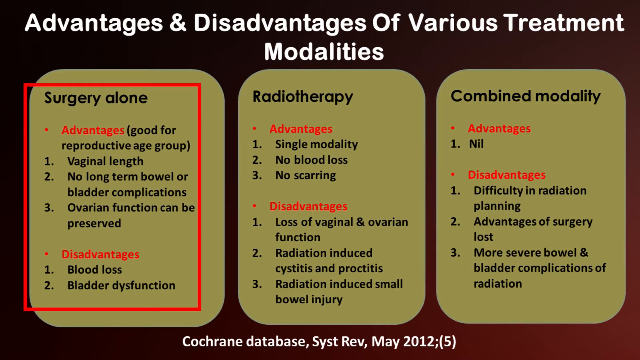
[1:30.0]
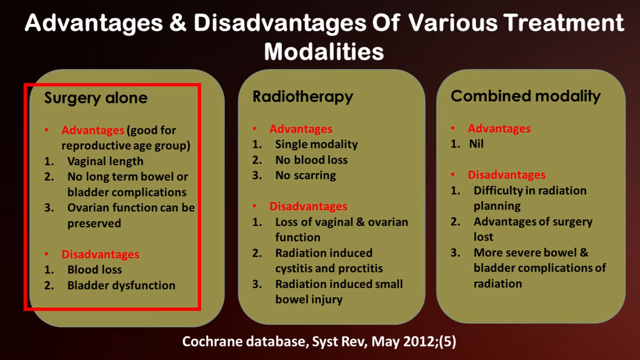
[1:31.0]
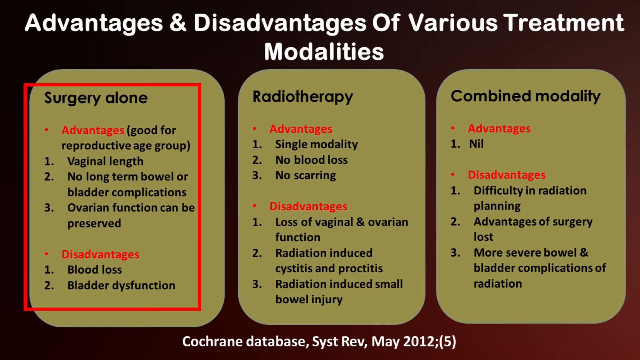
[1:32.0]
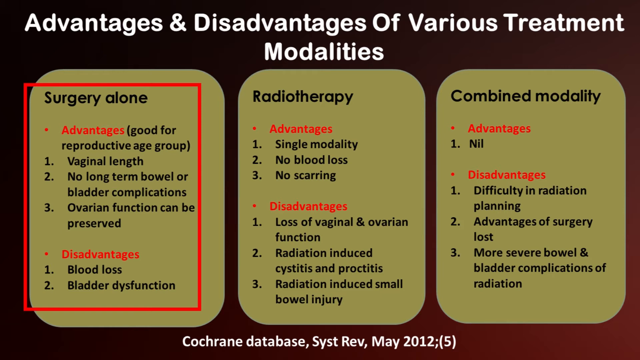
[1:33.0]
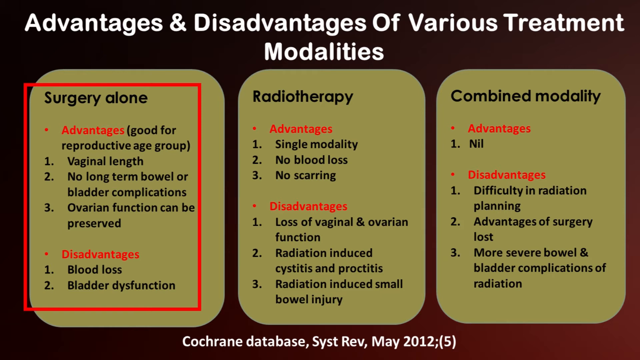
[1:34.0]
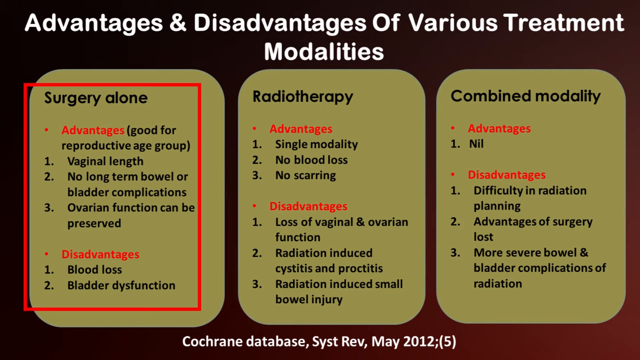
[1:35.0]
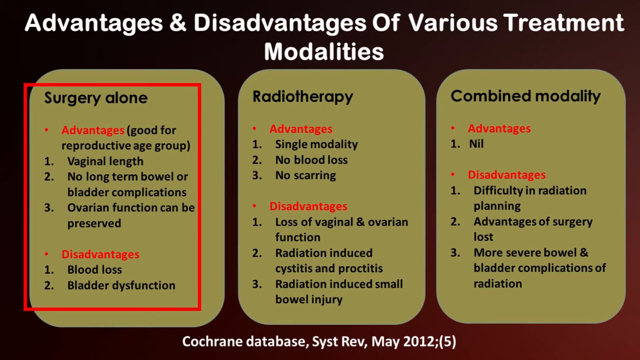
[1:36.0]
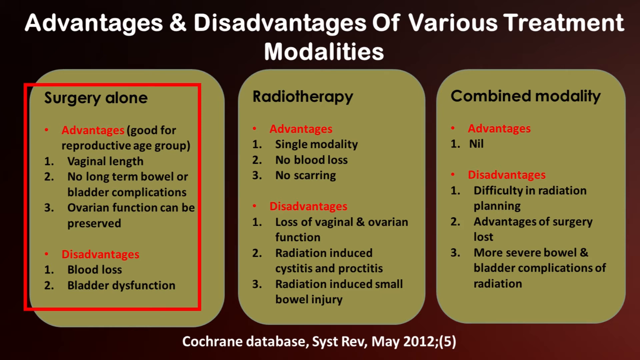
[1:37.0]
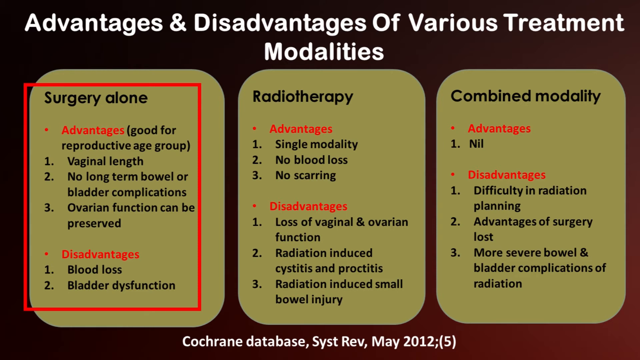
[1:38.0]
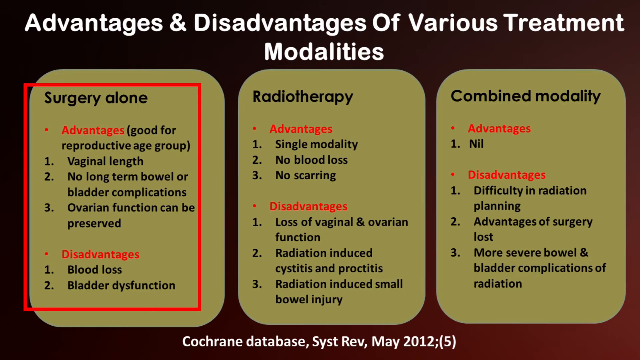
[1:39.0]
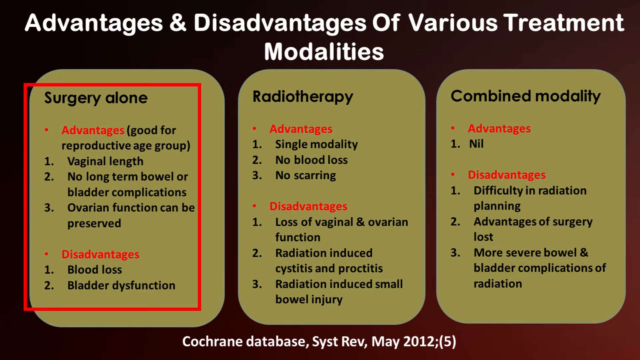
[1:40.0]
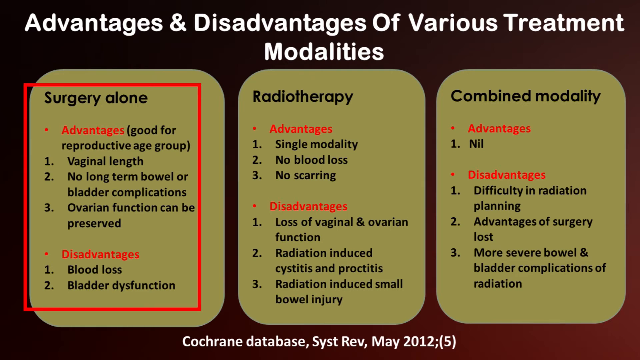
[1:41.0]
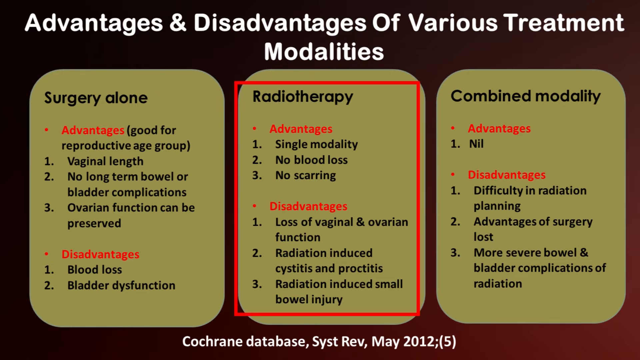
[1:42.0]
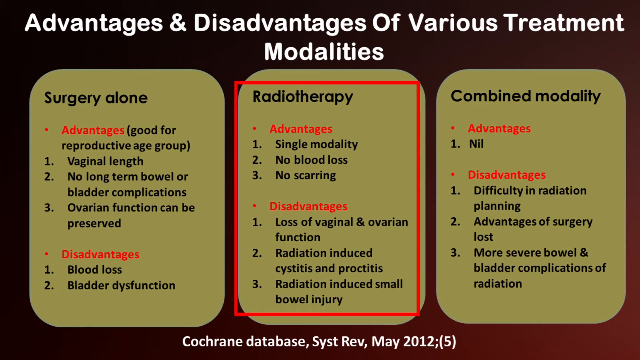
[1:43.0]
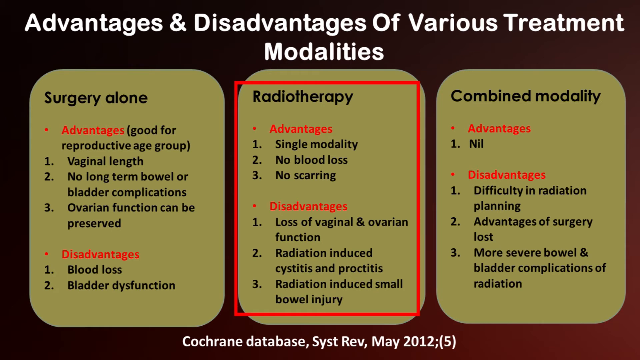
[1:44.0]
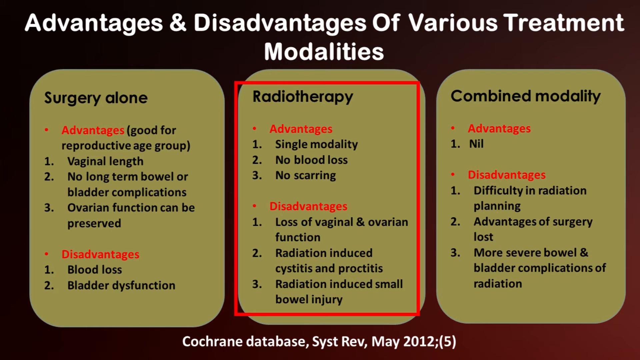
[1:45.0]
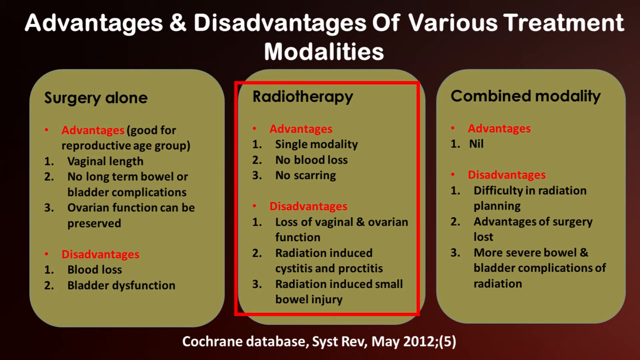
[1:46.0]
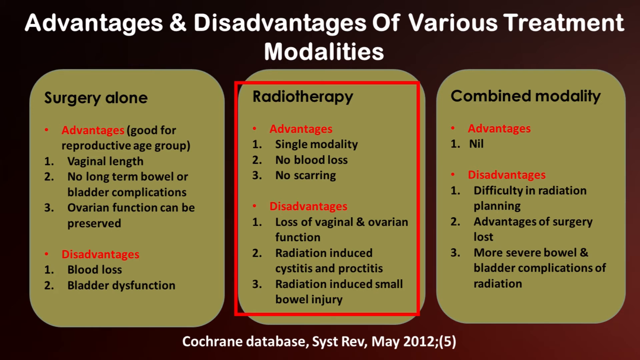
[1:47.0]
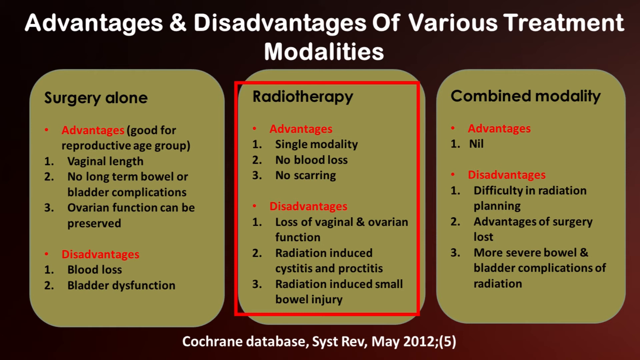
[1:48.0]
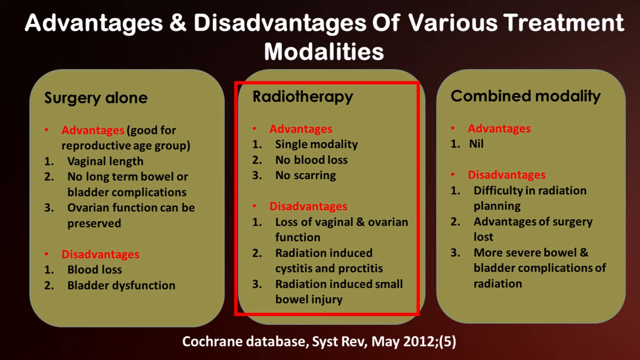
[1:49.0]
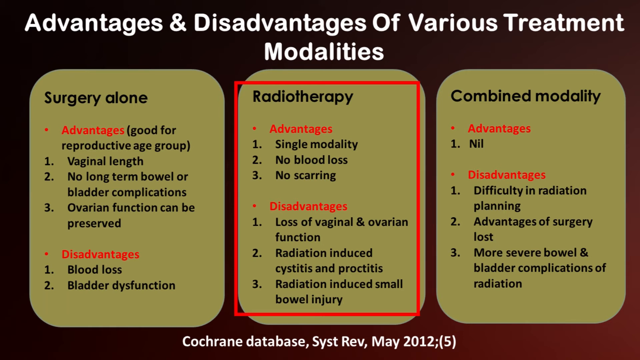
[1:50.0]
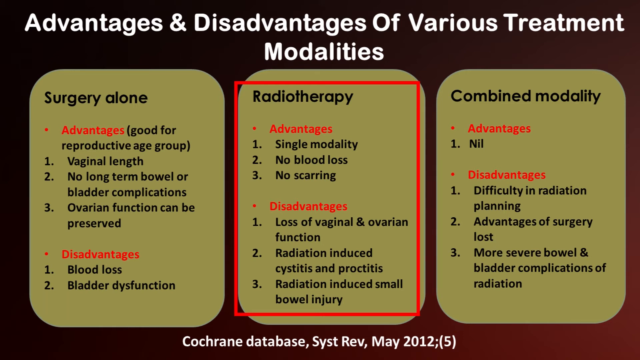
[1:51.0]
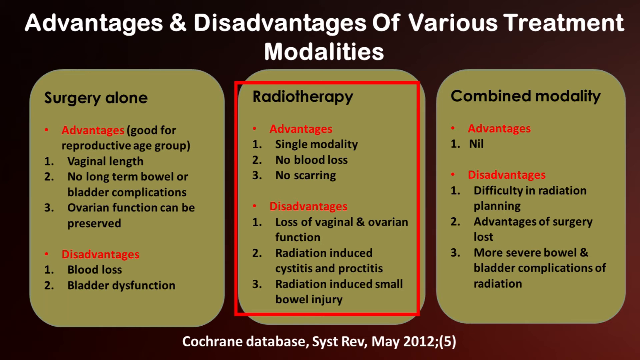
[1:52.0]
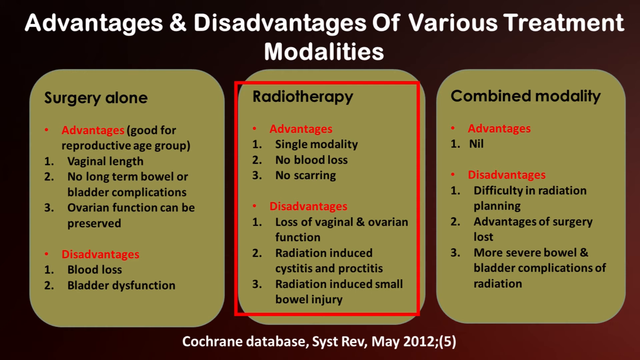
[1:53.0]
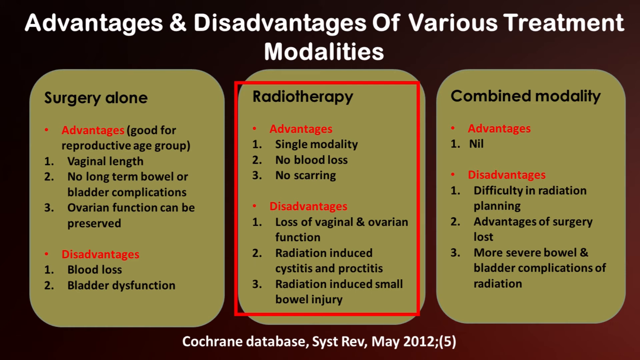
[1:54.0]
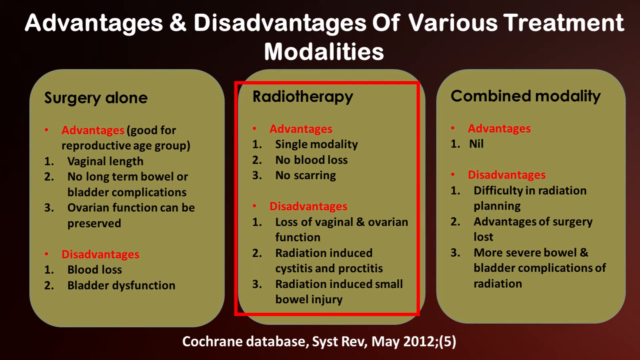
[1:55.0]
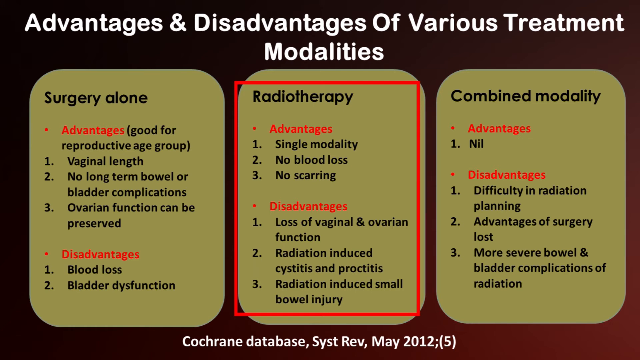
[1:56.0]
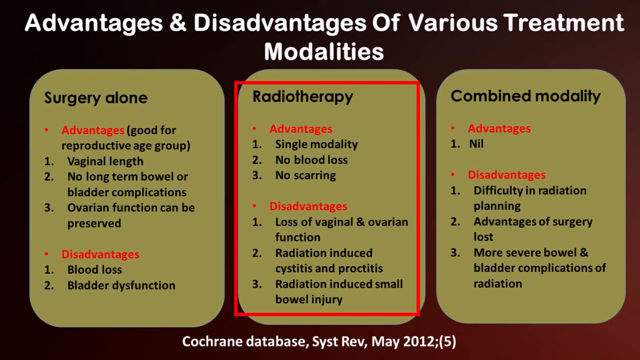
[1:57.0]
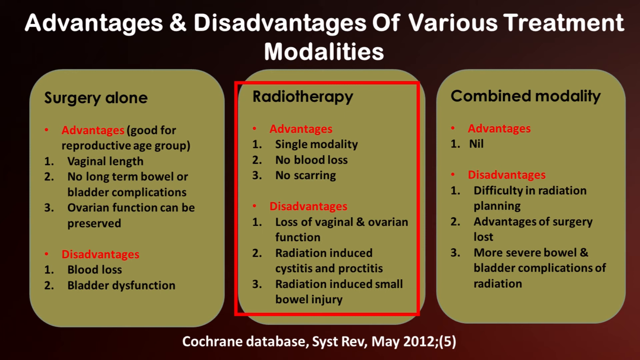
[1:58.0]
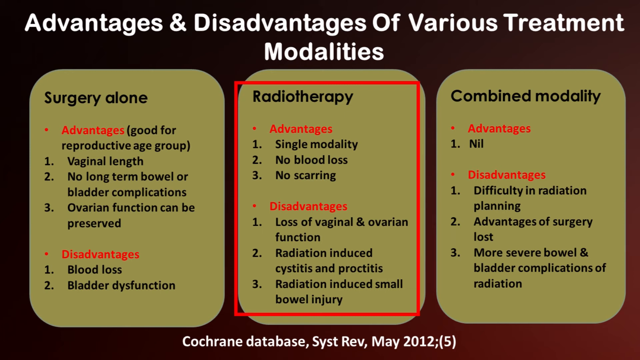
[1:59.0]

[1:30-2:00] At the top of the screen, bold white letters read "advantages and disadvantages of various treatment modalities". Below are three panels that appear to be yellow bubbles. A red box circles one, which says "surgery alone", with advantages "good for reproductive age group, vaginal length, no long-term bowel or bladder complications, ovarian function can be preserved" and disadvantages "blood loss, bladder dysfunction". It then moves over to radiotherapy, with the advantage "single modality" and disadvantages including "loss of vaginal and ovarian function" and "radiation-induced small bowel injury", and the list continues. The screen progresses to the next stage. White text at the bottom of the screen shows that the information looks to be sourced from the Cochrane database.